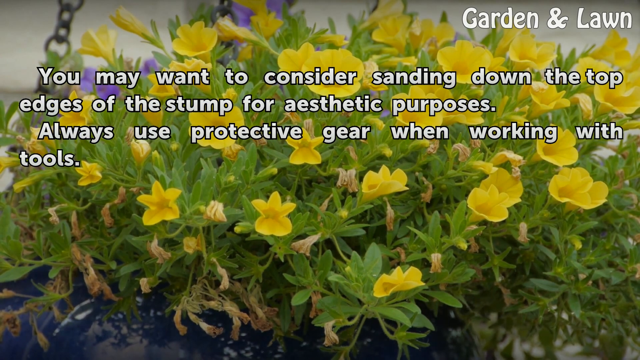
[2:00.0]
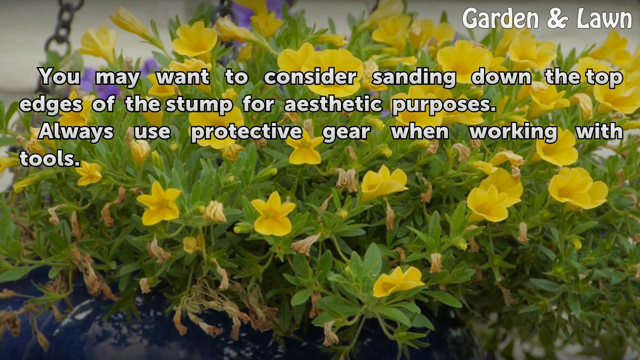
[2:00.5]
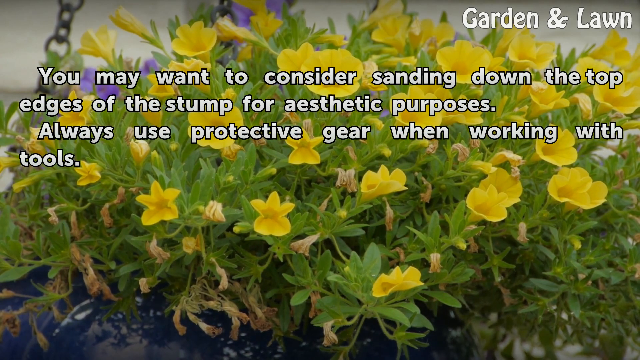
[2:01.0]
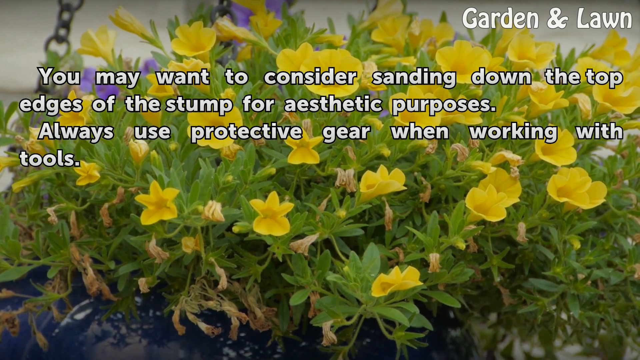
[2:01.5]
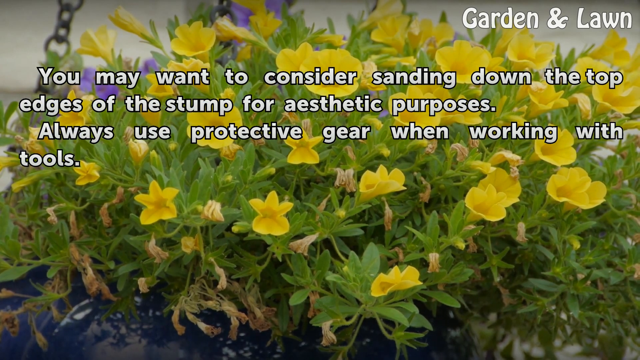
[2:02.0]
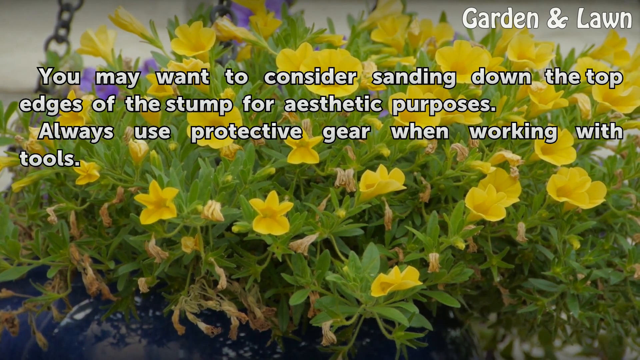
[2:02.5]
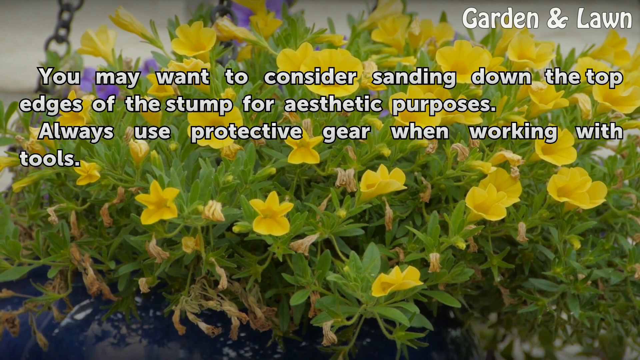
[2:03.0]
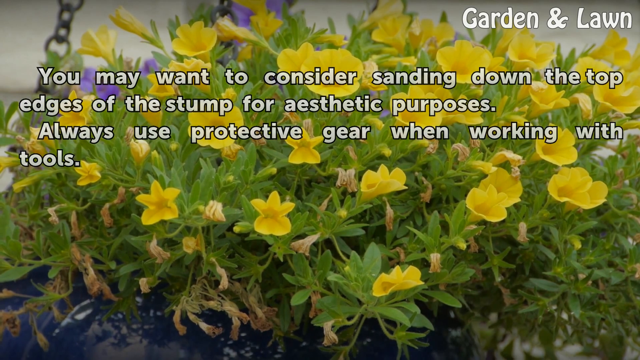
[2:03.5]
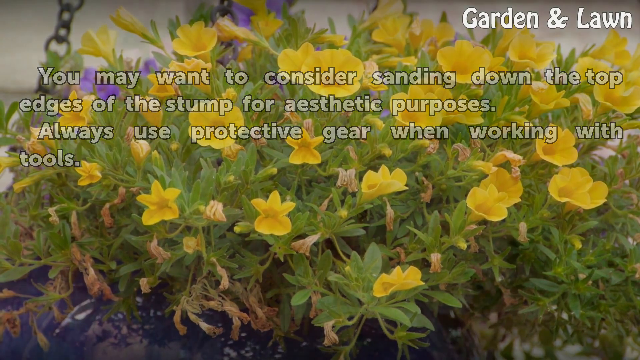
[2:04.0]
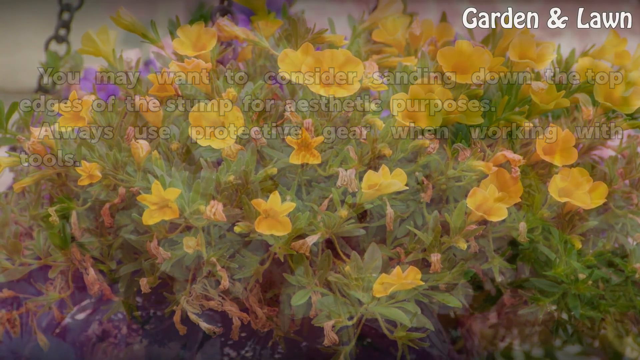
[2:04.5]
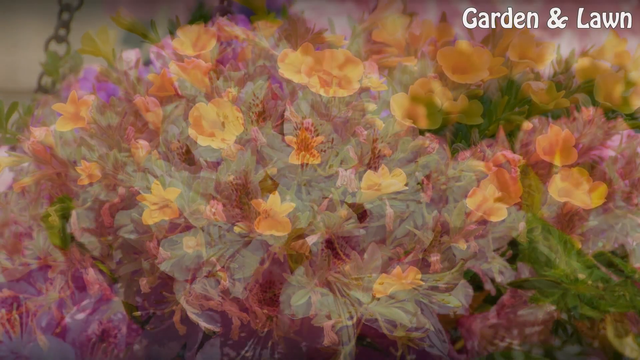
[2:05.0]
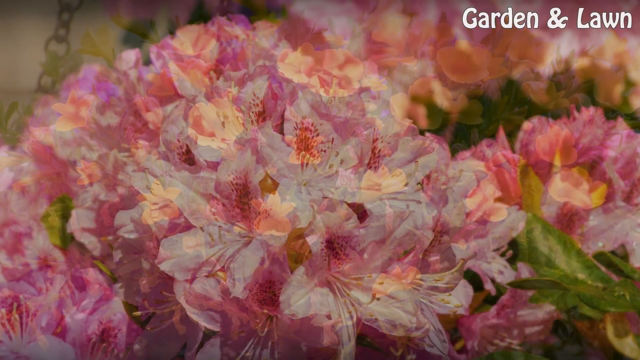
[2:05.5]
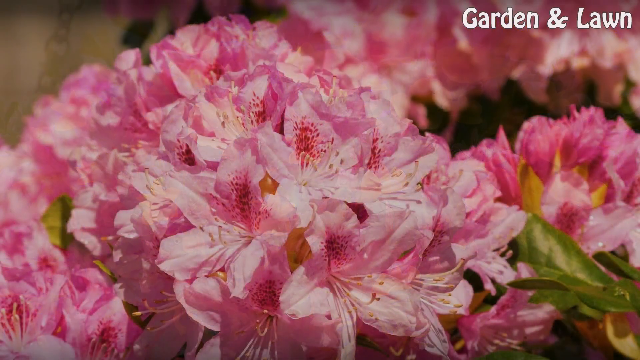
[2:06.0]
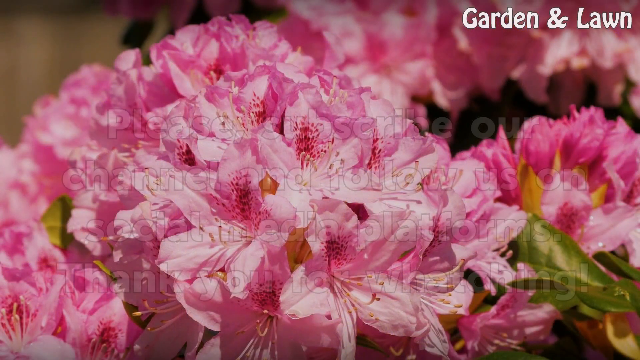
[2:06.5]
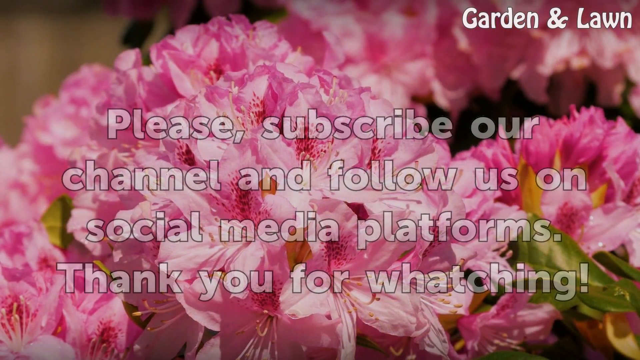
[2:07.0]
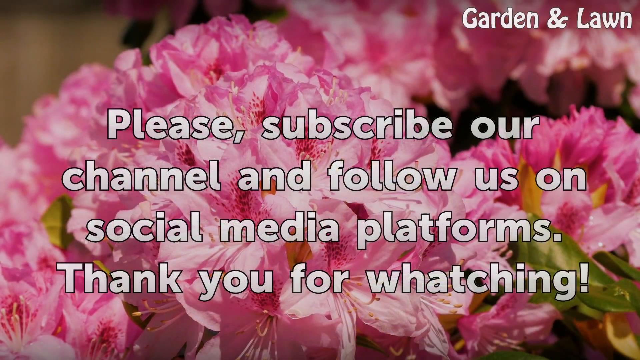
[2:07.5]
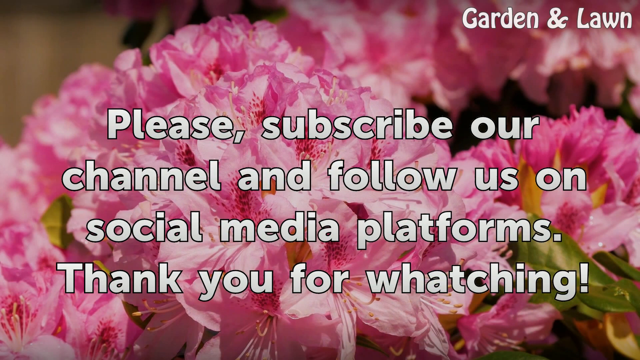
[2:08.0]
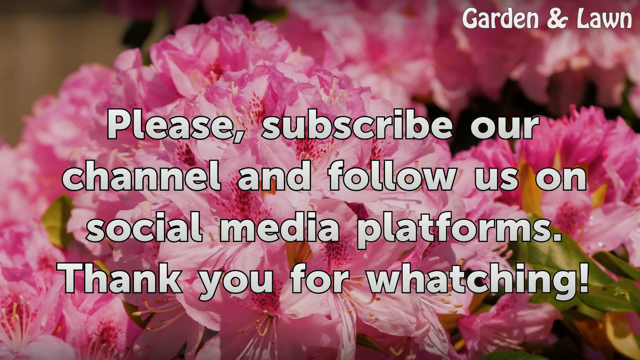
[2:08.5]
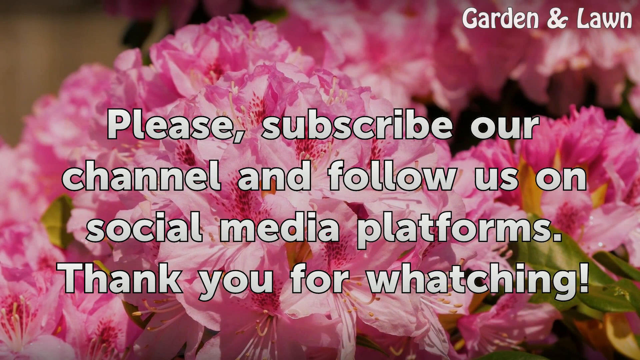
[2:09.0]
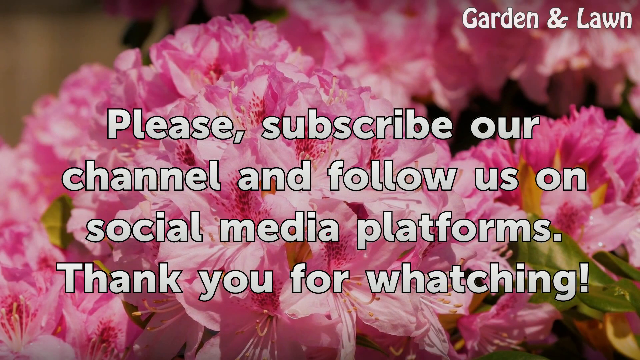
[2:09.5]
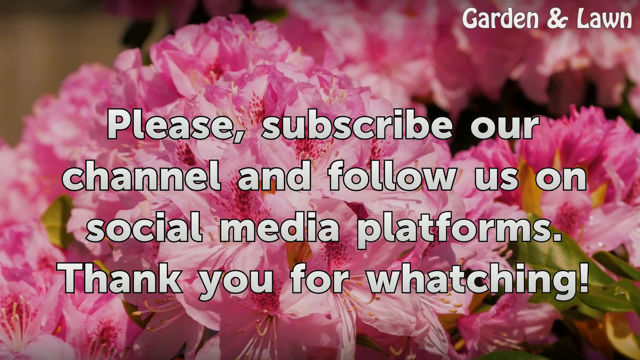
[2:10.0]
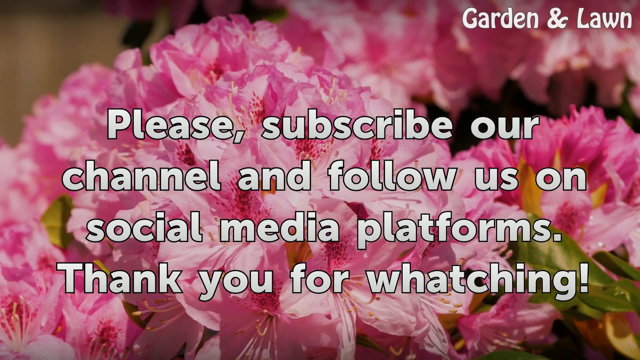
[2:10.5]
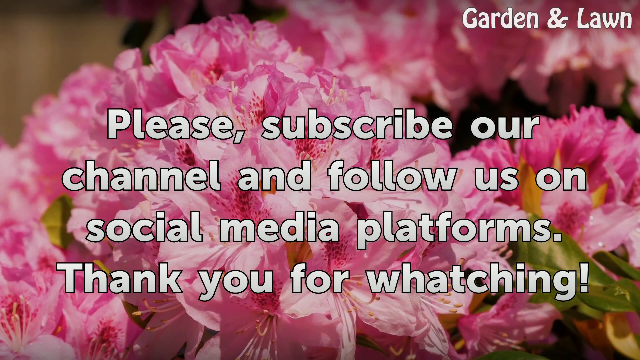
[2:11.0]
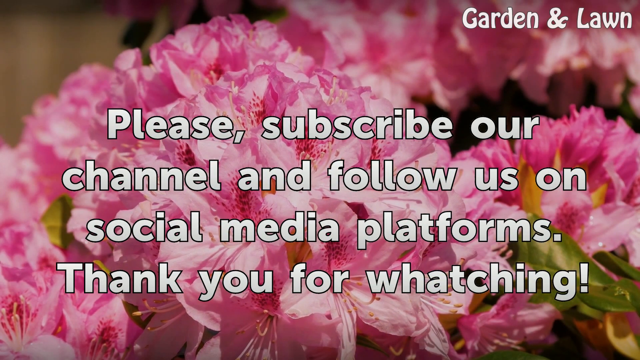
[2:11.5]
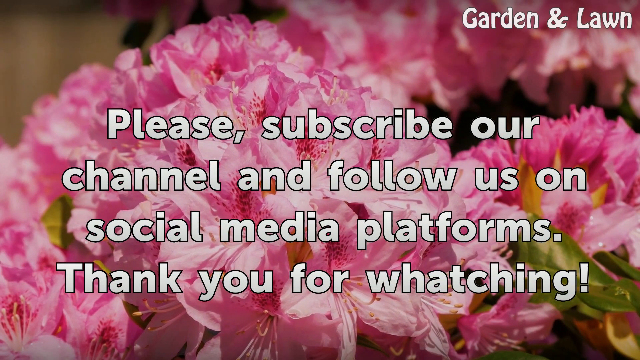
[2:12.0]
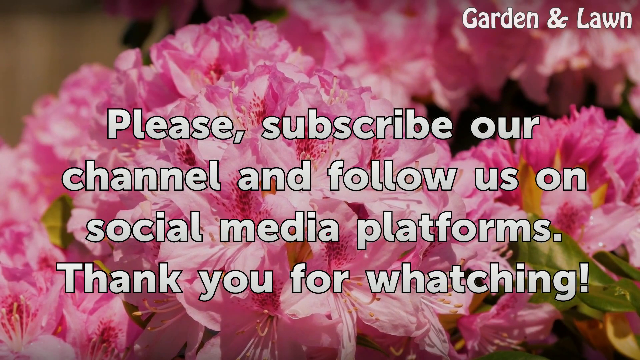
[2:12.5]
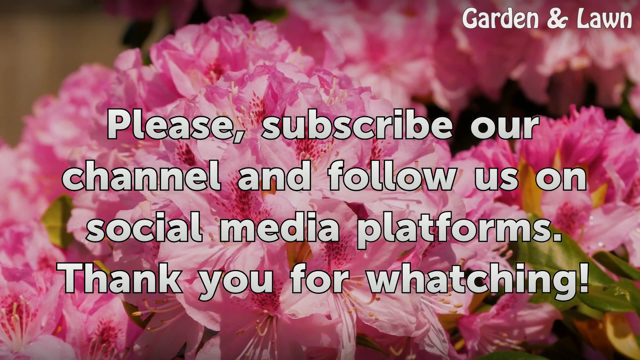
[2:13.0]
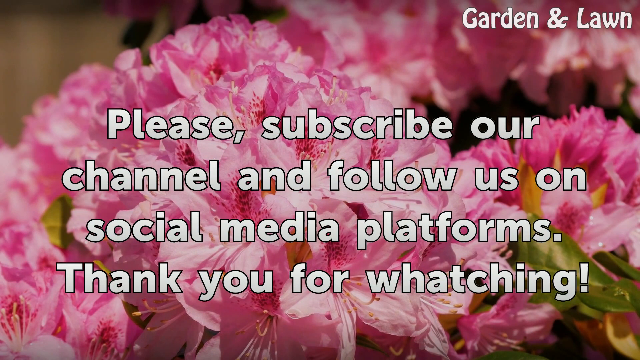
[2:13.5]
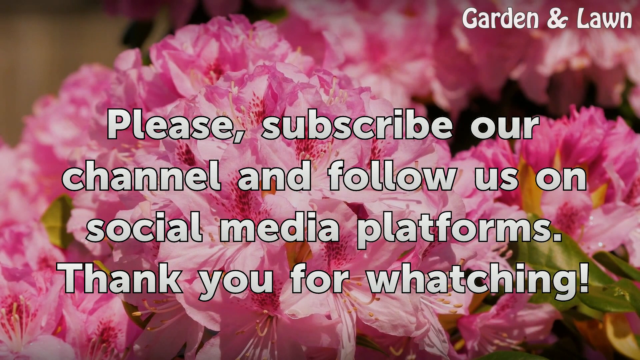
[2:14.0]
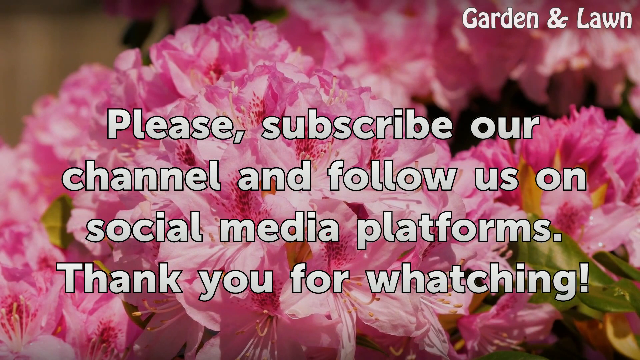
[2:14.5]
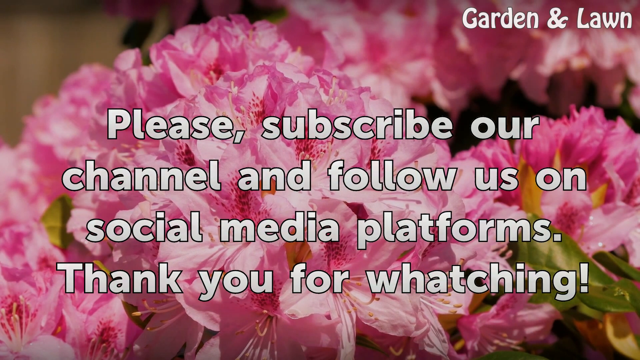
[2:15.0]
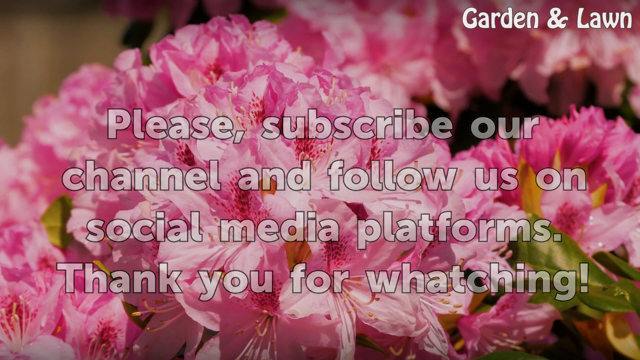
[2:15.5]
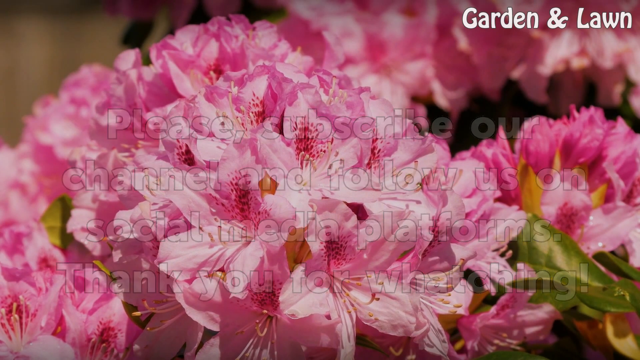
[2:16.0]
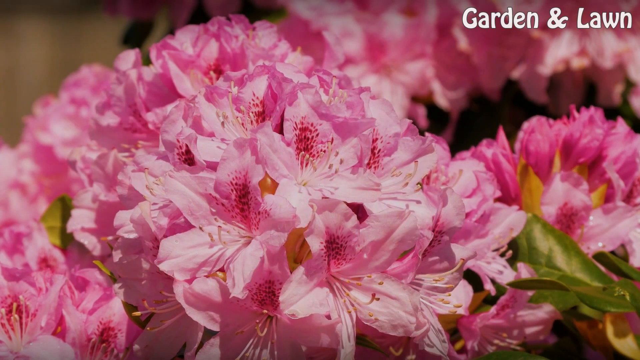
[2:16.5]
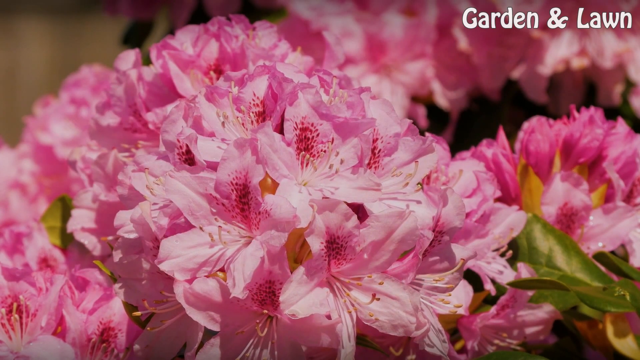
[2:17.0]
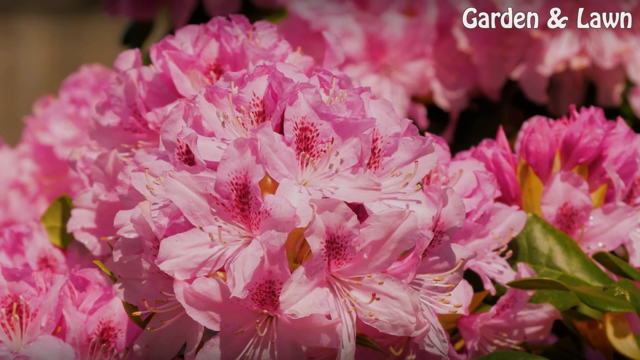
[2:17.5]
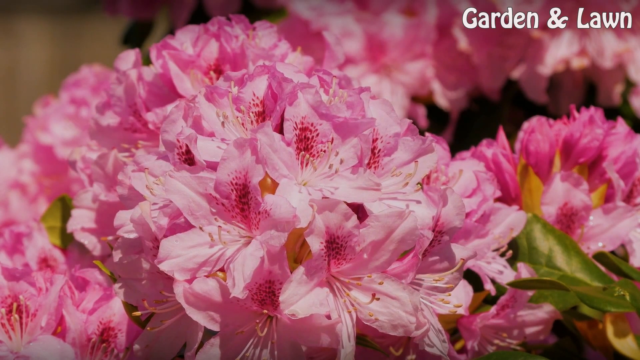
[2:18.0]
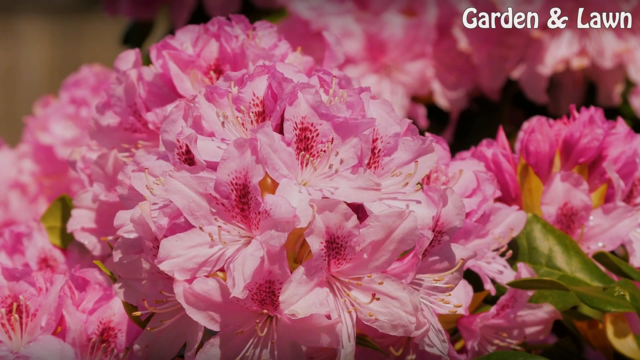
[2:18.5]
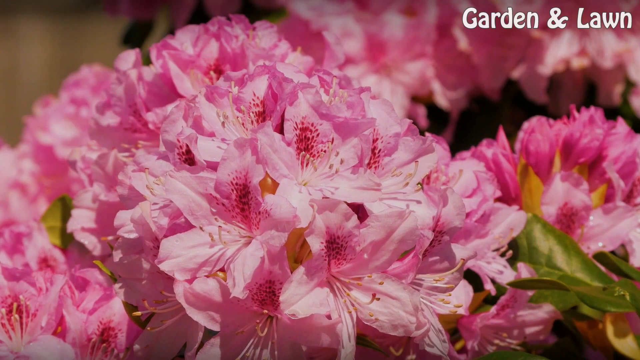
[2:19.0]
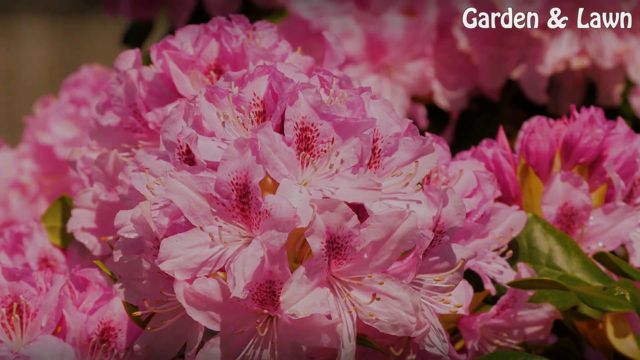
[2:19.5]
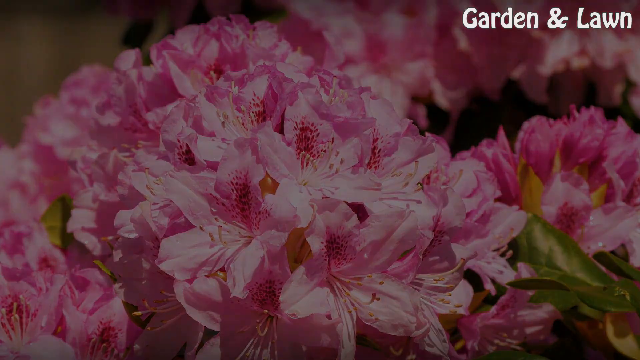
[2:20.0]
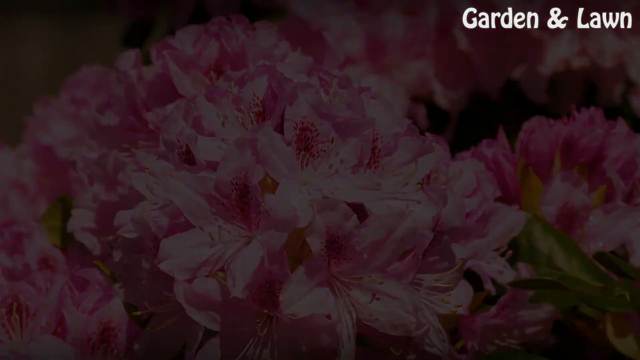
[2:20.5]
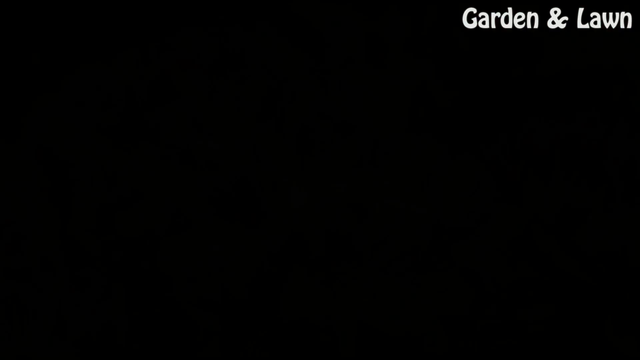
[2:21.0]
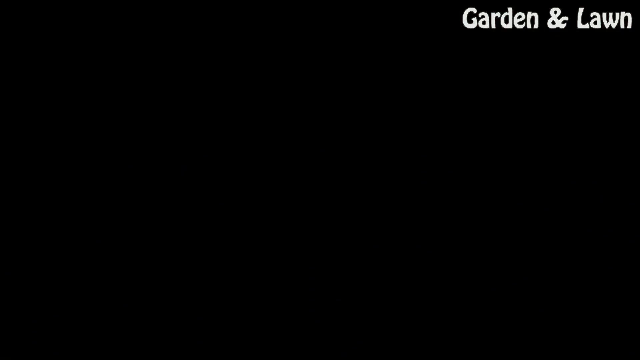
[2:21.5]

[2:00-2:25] A scene shows a large number of yellow flowers with small green leaves, a cluster of some kind of yellow flowers. At the top the text reads "garden and lawn," and the message on the screen says "you may want to consider sanding down the top edges of the stump for aesthetic purposes. Always use protective gear when working with tools." The message stays on the screen while the flowers blow slightly in a breeze. The scene then changes to a very close-up picture of what looks like possibly a pink or purple azalea, with the message "please subscribe to our channel and follow us on social media platforms. Thank you for watching." The pink flower stays in the background, moving slightly in the wind. The message disappears, leaving only the flowers, and then the screen goes black.